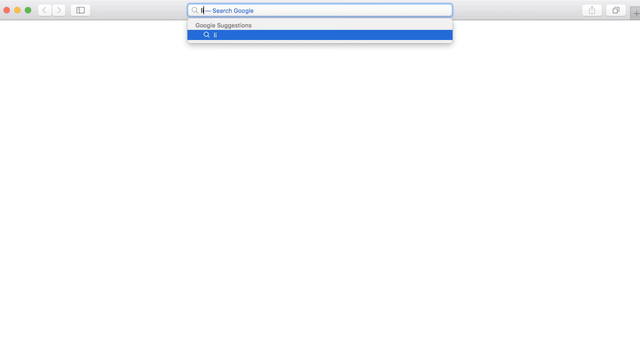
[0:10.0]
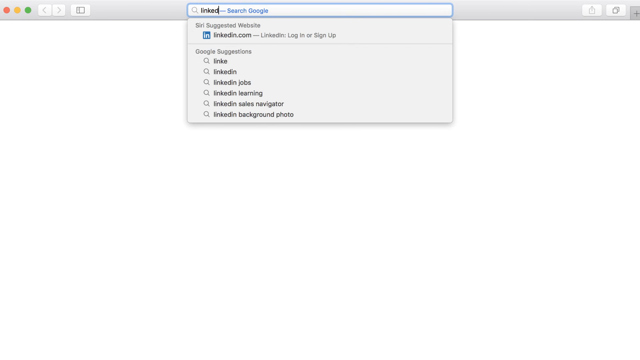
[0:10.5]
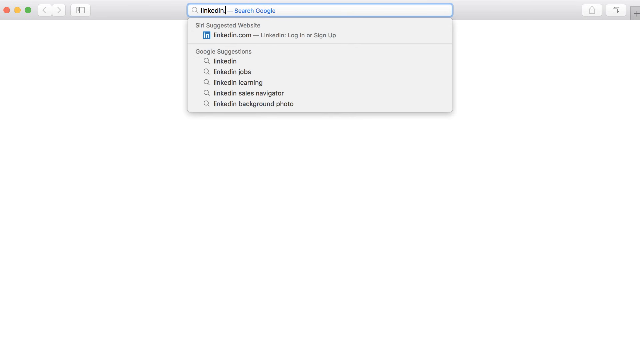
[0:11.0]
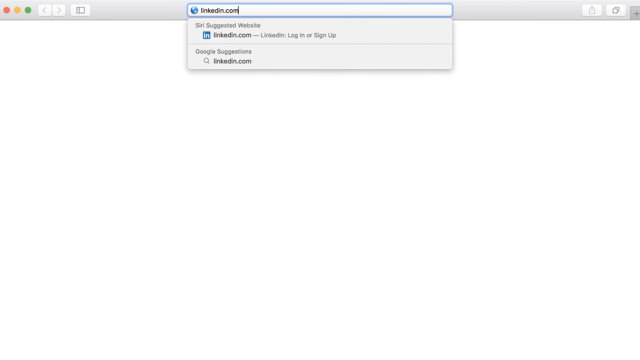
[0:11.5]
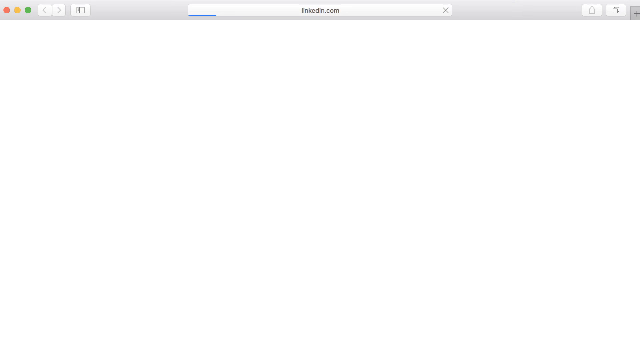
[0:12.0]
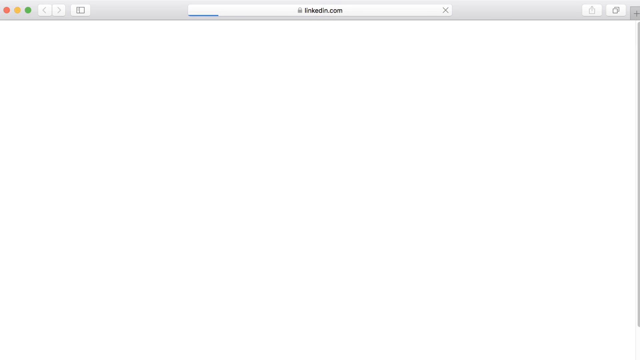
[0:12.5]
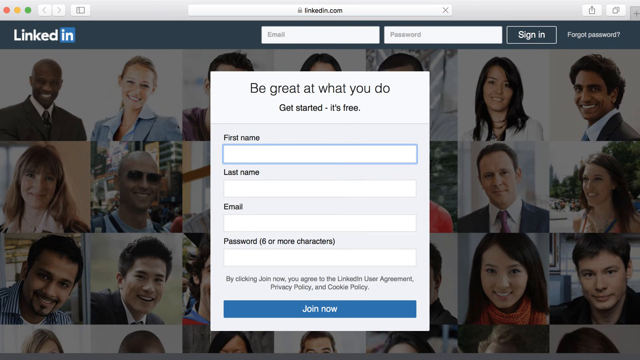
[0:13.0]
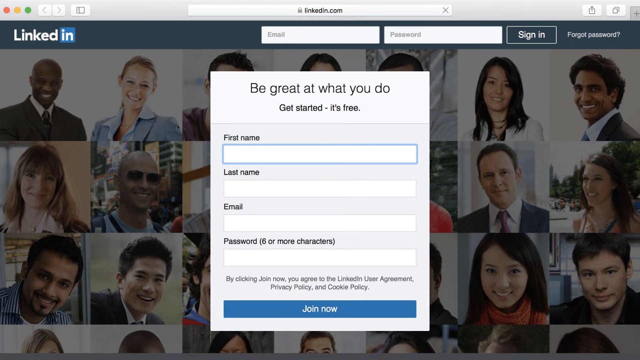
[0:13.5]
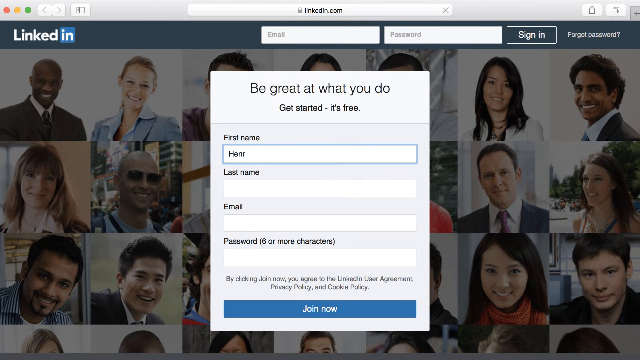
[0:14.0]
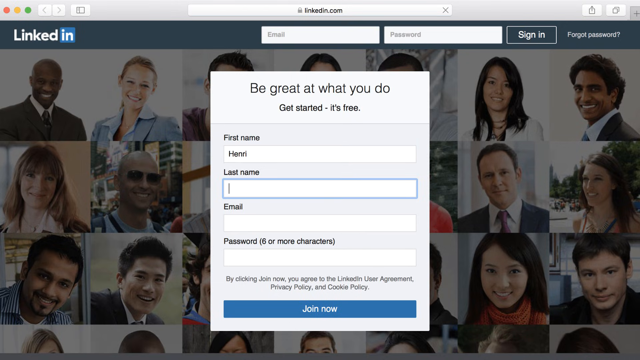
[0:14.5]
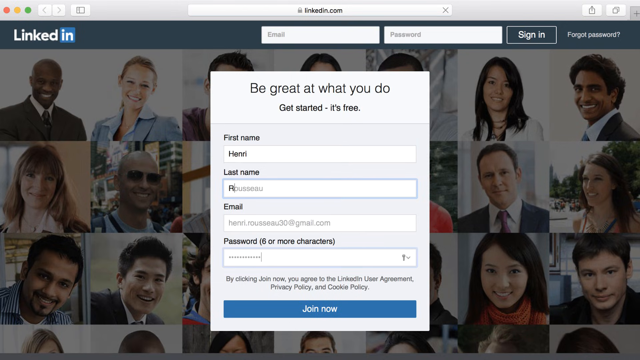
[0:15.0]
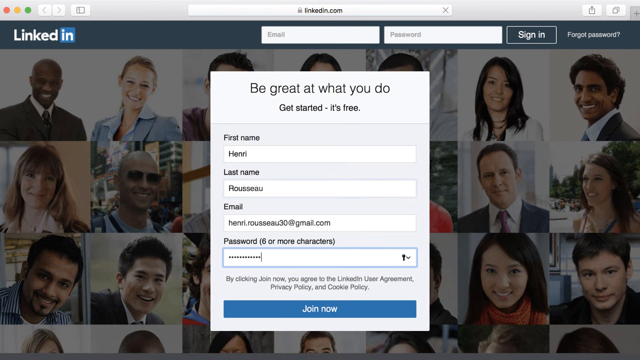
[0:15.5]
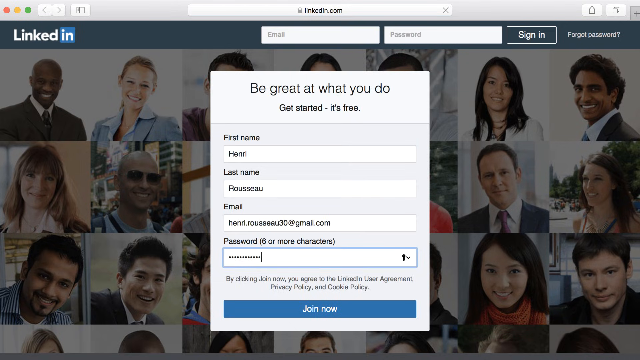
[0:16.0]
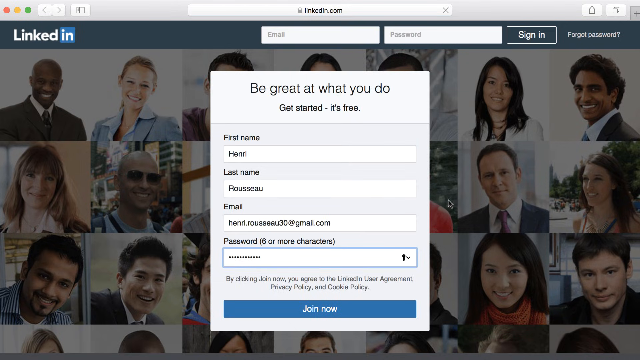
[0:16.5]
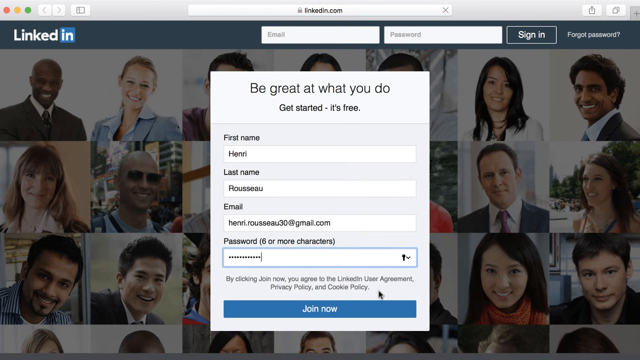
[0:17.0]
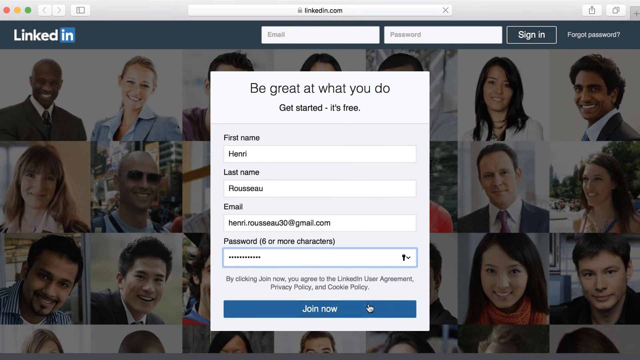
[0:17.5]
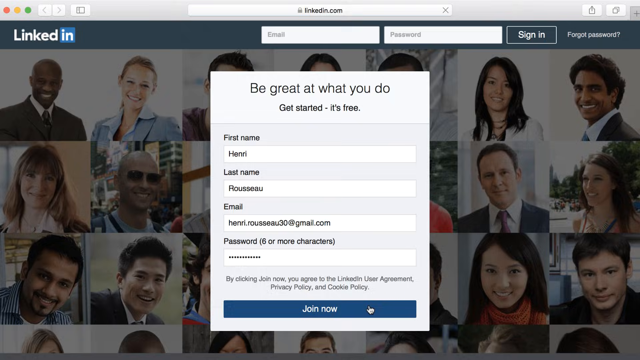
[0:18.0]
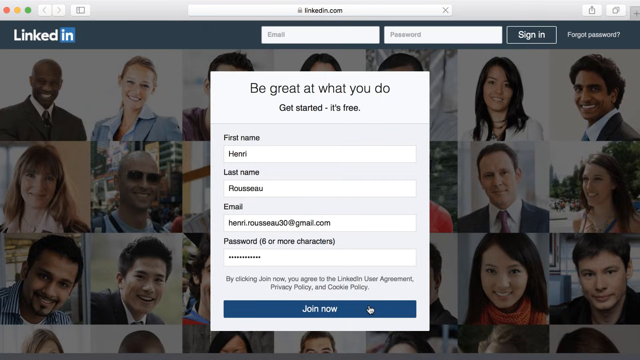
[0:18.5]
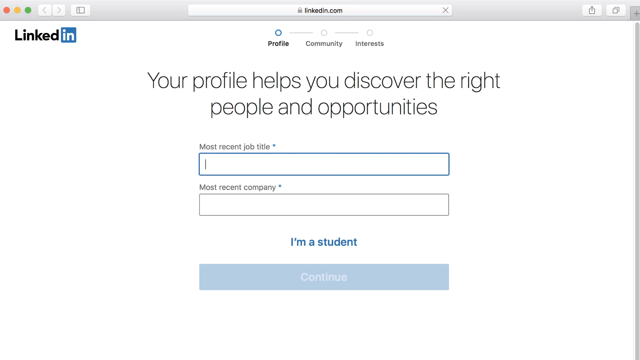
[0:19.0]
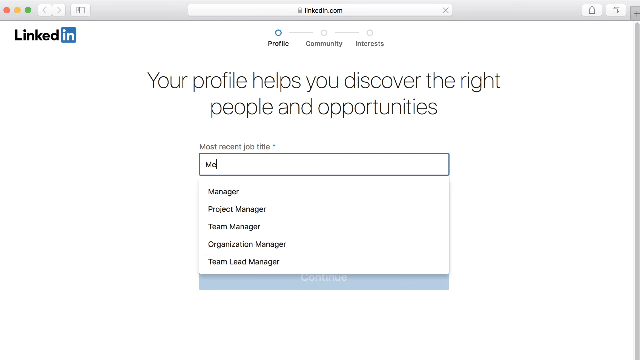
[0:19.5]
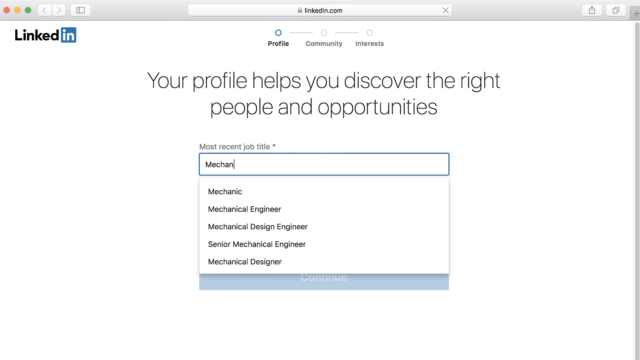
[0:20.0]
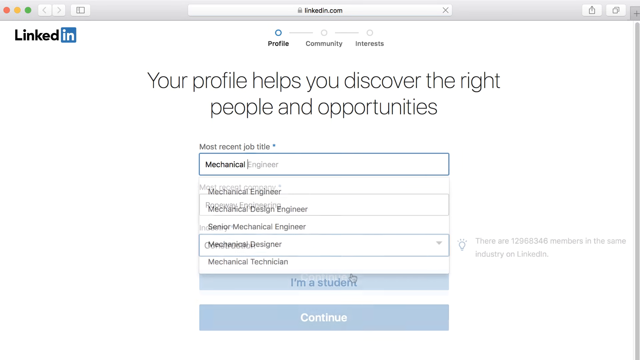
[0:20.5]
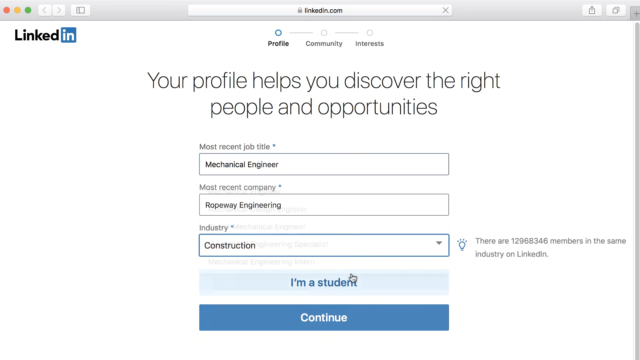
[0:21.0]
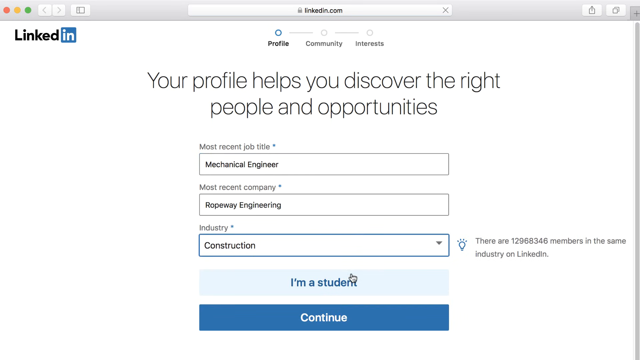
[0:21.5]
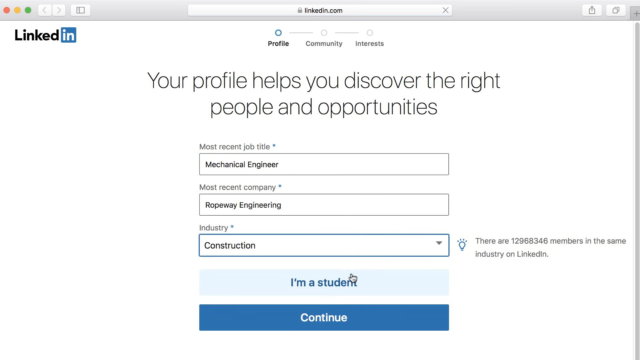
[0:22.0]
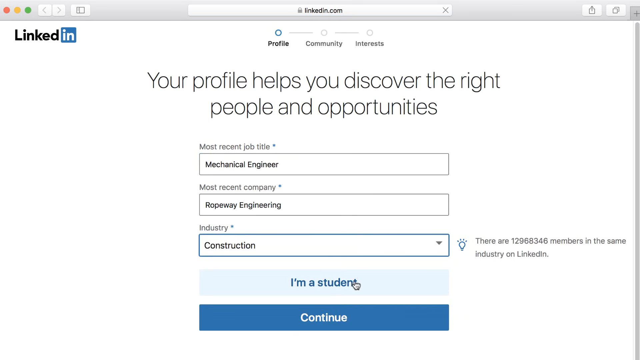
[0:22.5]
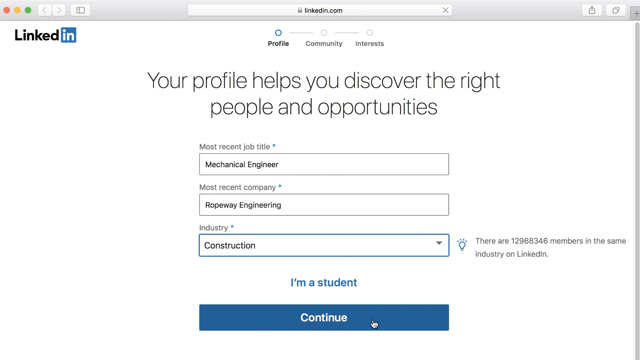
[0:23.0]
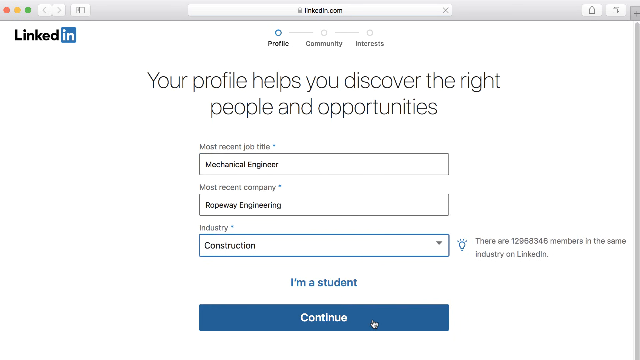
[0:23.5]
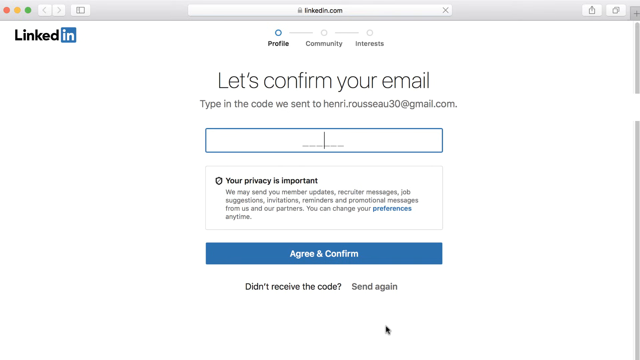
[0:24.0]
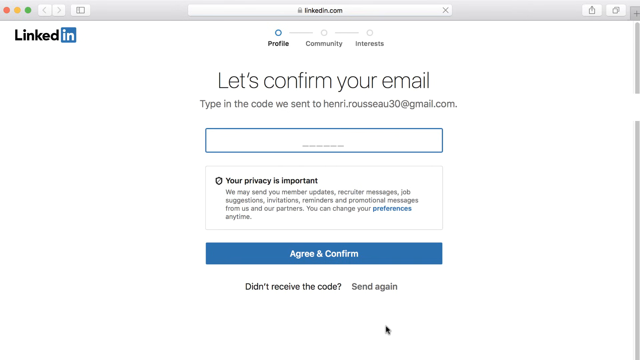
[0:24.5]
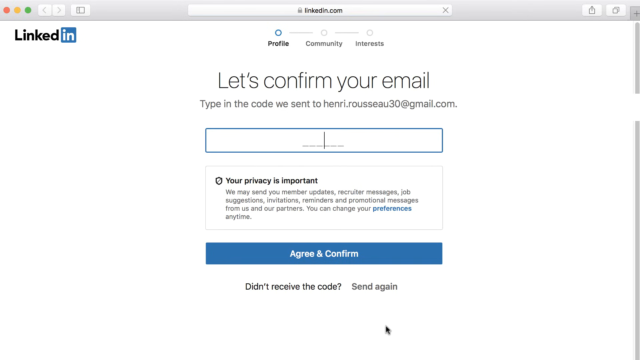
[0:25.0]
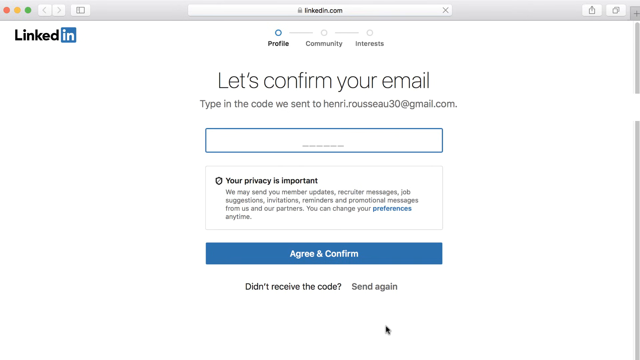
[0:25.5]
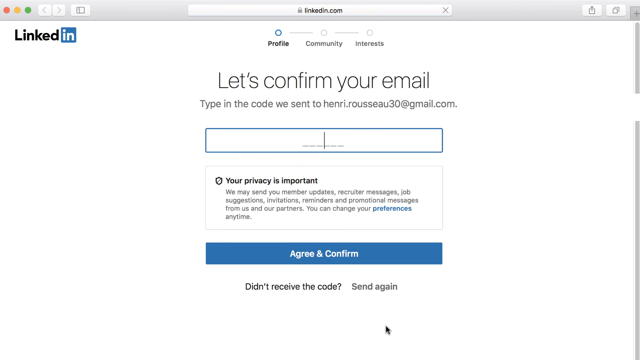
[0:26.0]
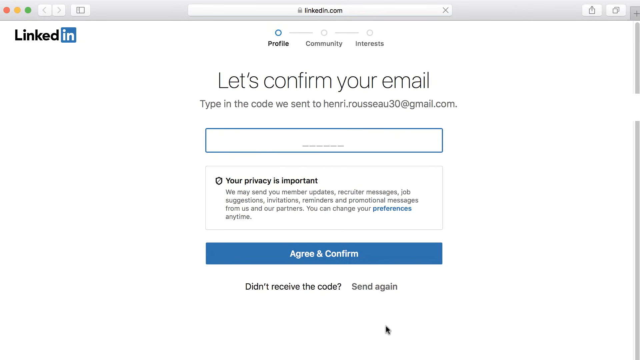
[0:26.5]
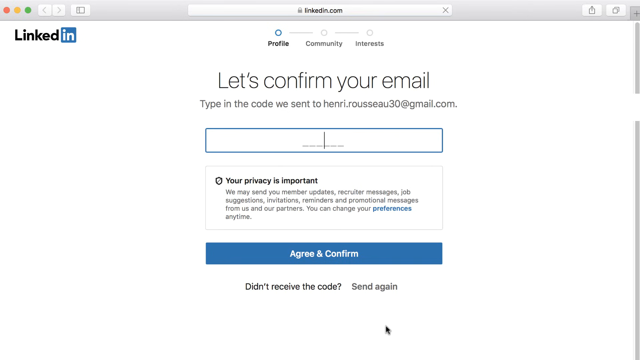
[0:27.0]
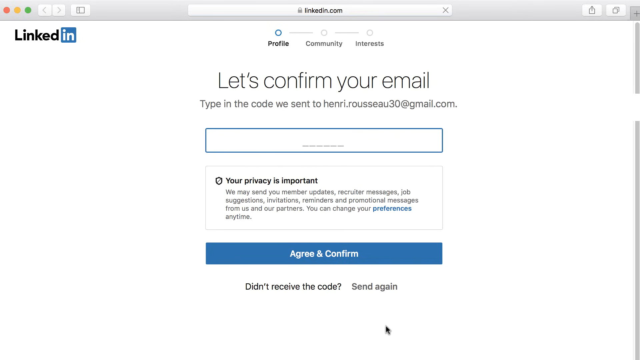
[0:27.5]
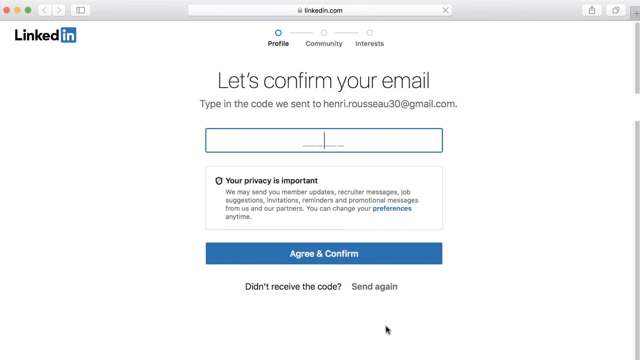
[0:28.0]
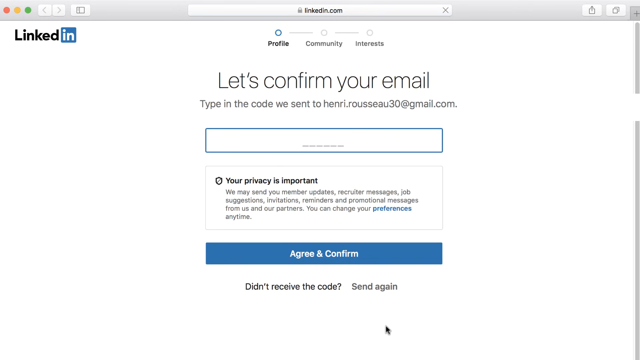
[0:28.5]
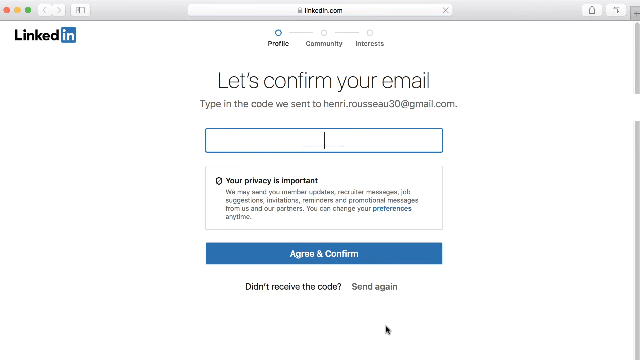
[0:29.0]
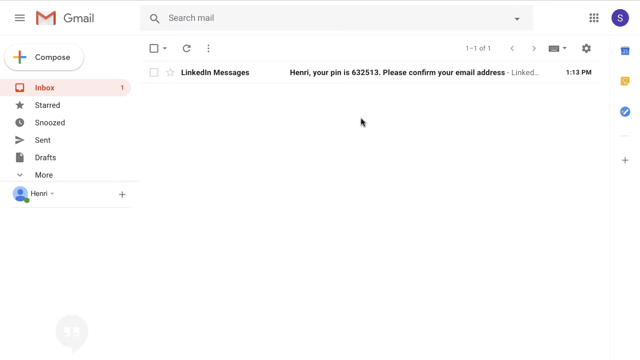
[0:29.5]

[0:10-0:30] The process of signing in to a LinkedIn profile is shown. First Google appears and LinkedIn is typed in. Then the name fields for the profile are shown, followed by the email field, where the email is filled in. After signing in, the name is filled in and then the job title on LinkedIn. The steps for getting a LinkedIn profile are all shown going through Google.